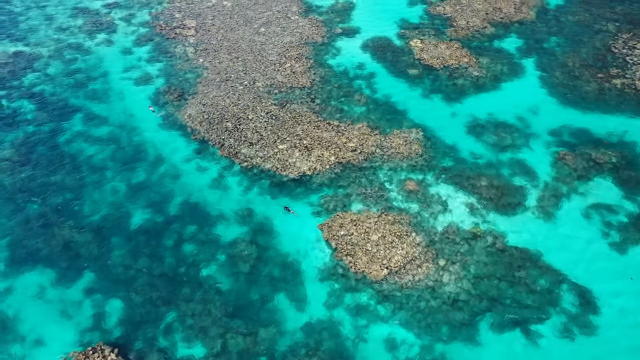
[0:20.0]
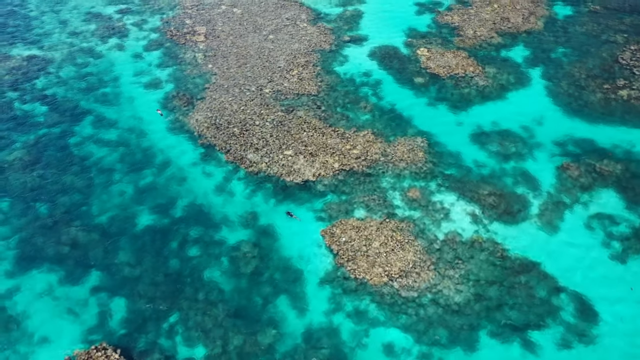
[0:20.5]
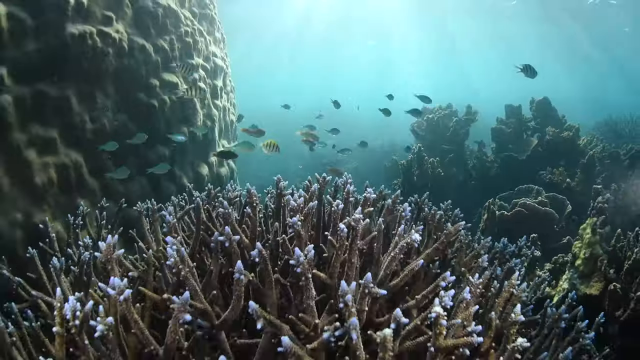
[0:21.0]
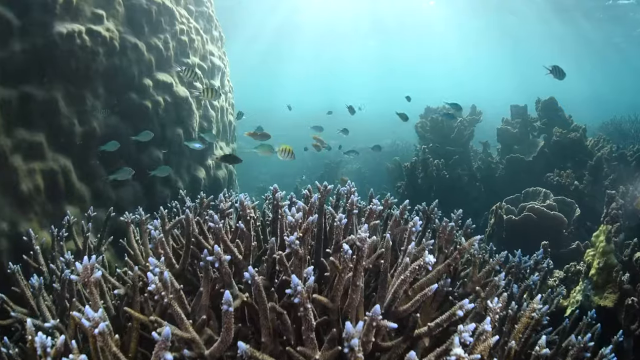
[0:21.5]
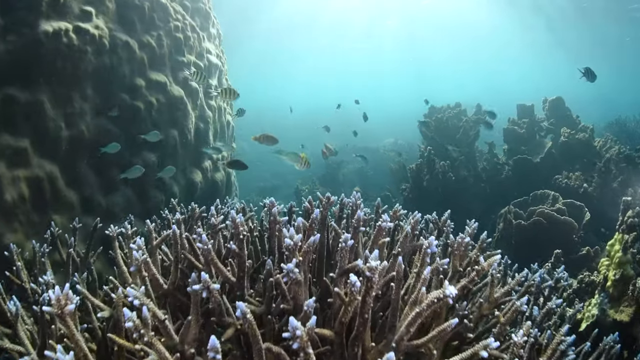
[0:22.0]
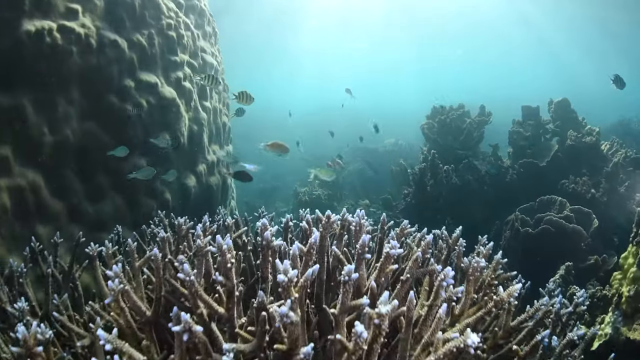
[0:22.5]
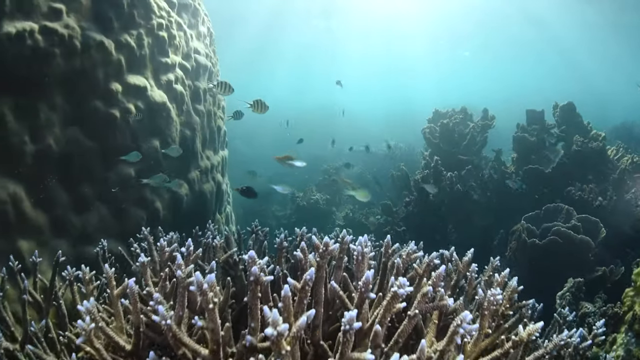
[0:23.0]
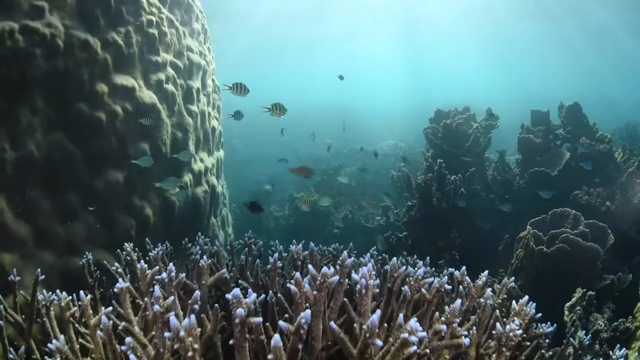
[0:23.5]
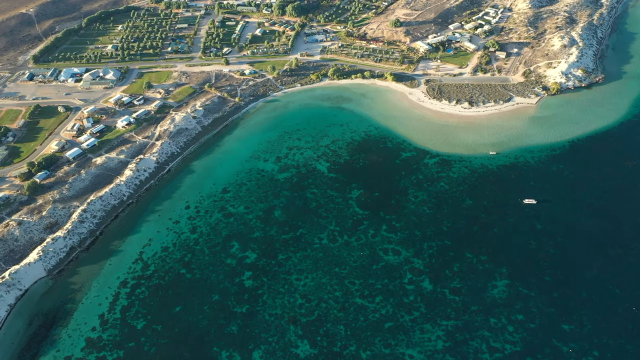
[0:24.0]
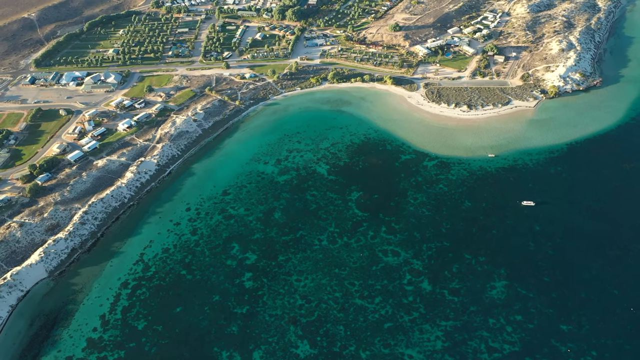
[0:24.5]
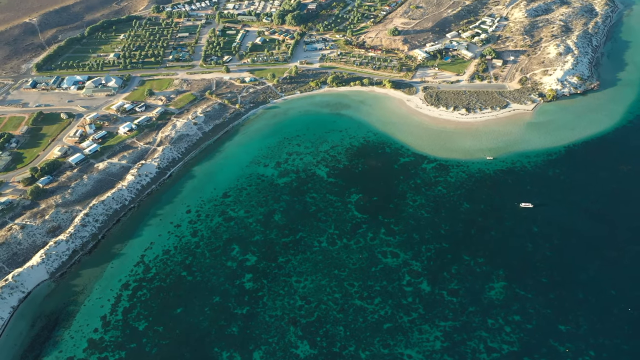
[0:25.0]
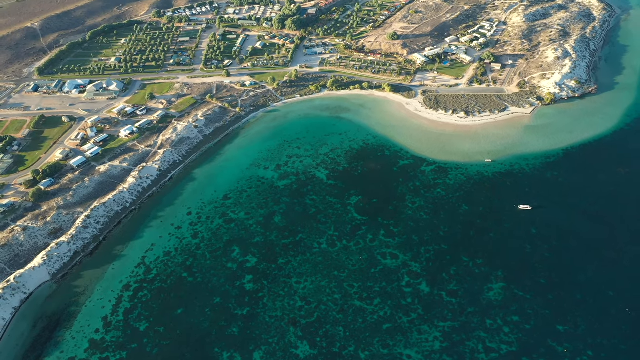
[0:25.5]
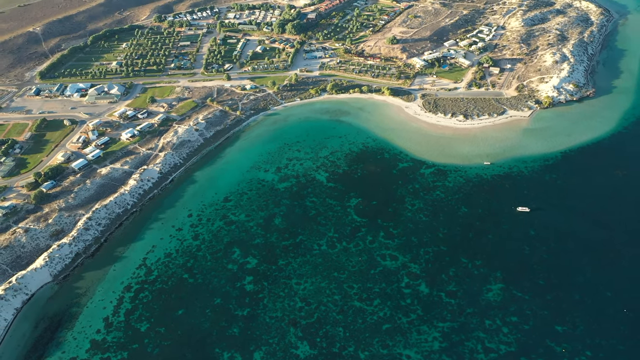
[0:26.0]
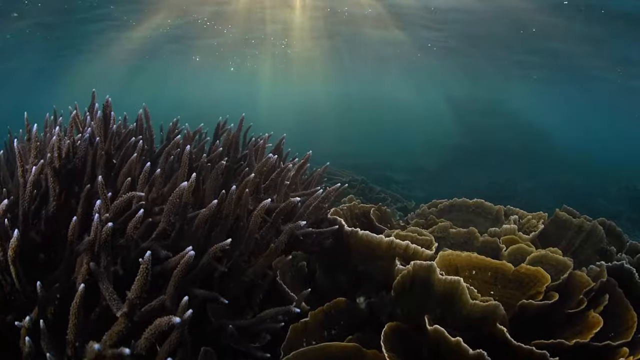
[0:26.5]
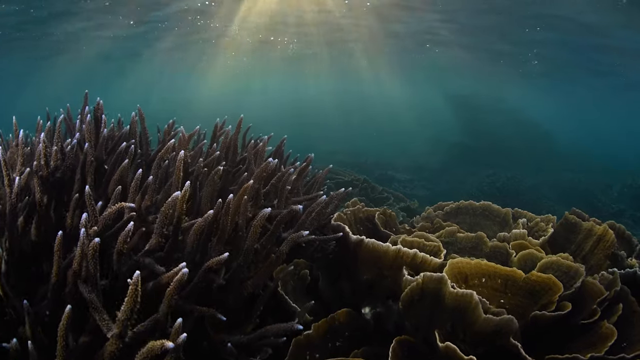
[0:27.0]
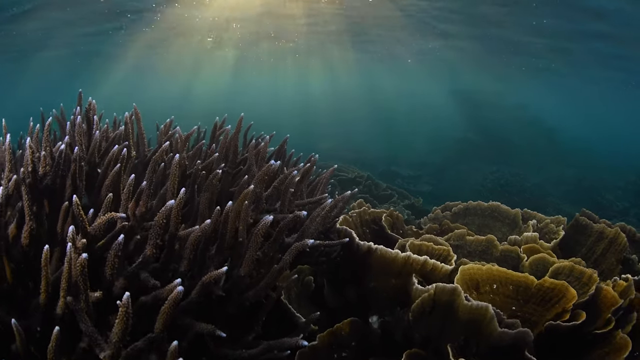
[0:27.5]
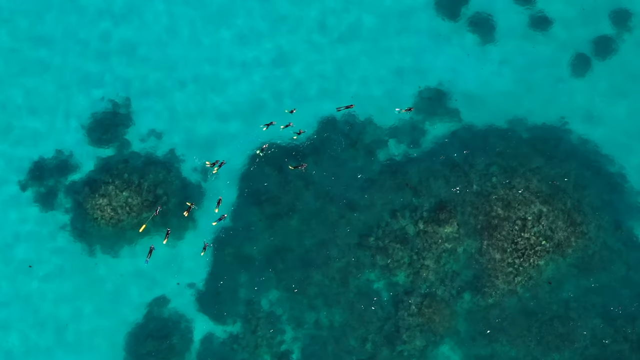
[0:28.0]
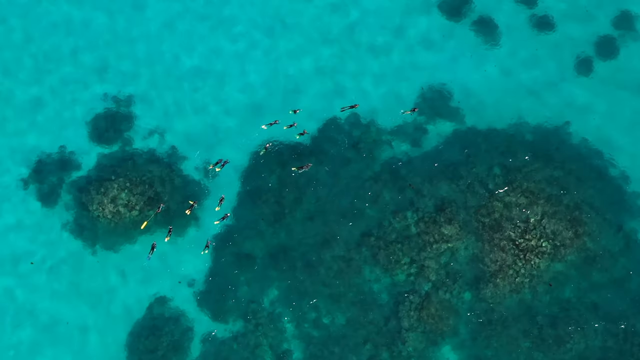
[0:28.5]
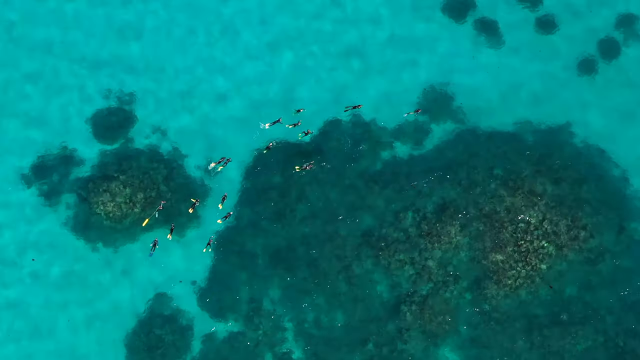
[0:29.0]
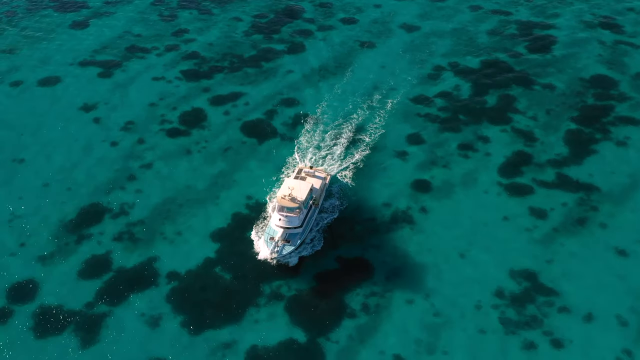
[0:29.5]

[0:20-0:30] A coral reef is filmed from above, and the footage then moves down into the water, almost like a diver's view, showing various species of fish around the reef. An aerial view follows, showing the sheer size of the coral reef and the land in close proximity to it. A close-up of the reef shows the sun shining through the water onto parts of the reef. A series of divers, probably several dozen, swim in and around the coral reef, filmed from above. A boat, like a cruise ship, goes around the area where the coral reef is.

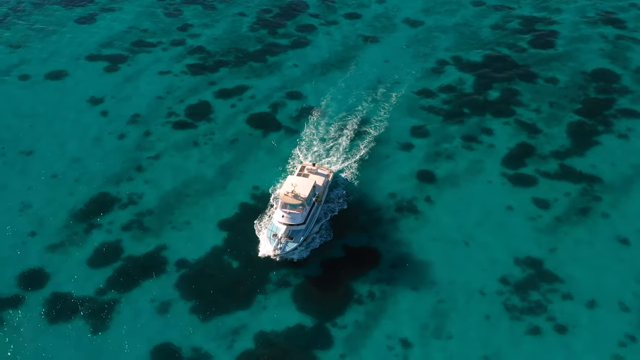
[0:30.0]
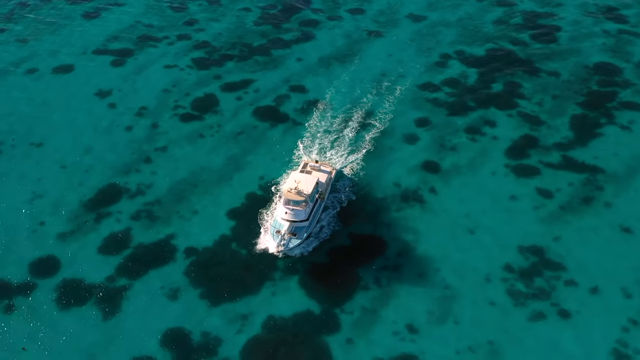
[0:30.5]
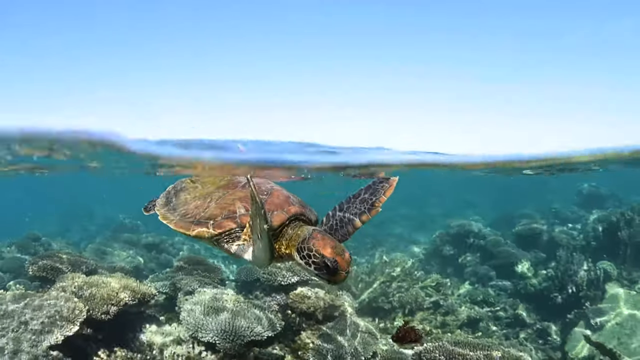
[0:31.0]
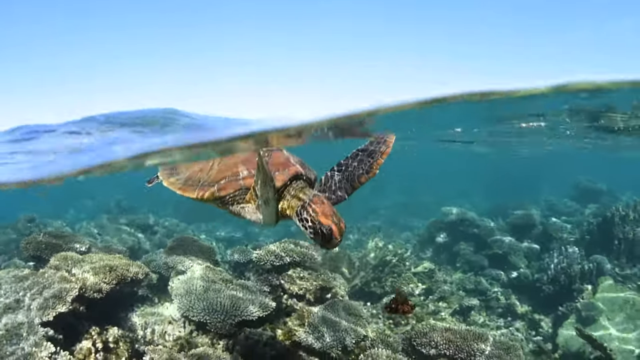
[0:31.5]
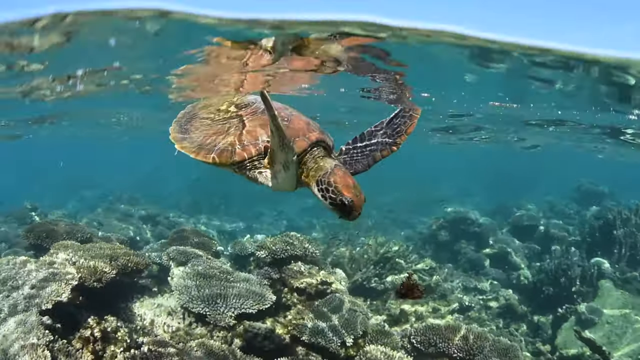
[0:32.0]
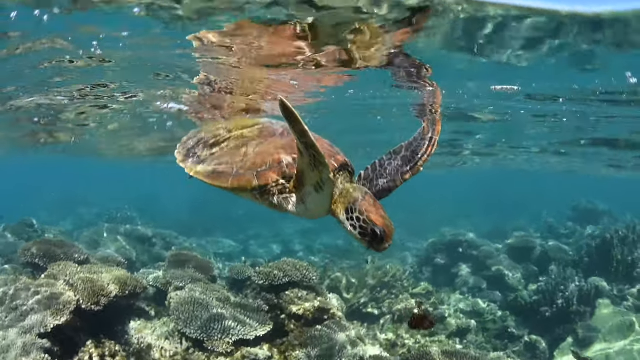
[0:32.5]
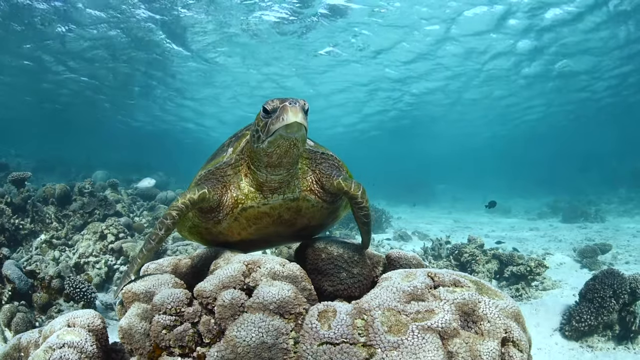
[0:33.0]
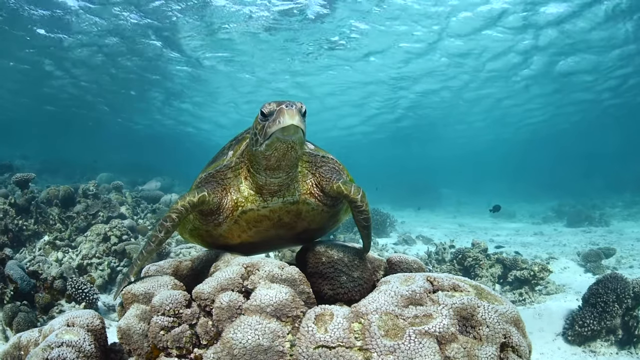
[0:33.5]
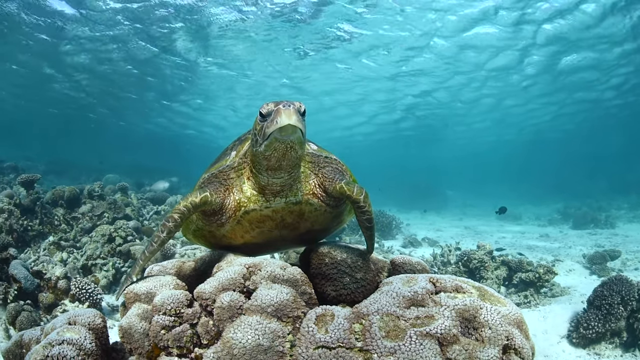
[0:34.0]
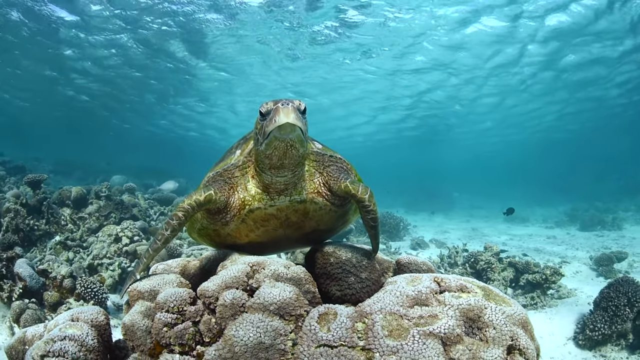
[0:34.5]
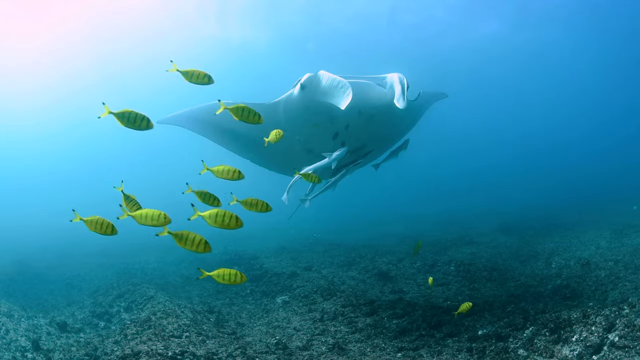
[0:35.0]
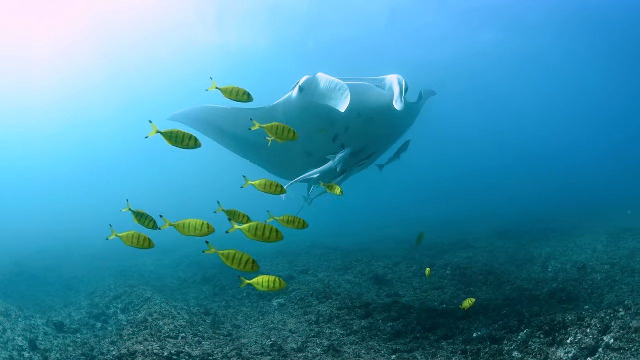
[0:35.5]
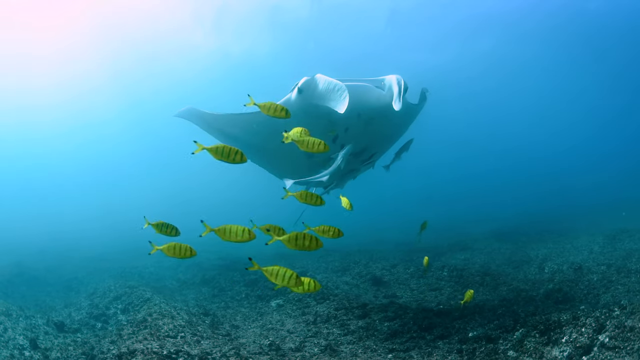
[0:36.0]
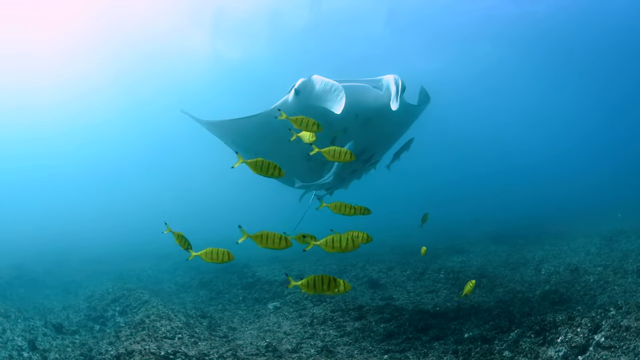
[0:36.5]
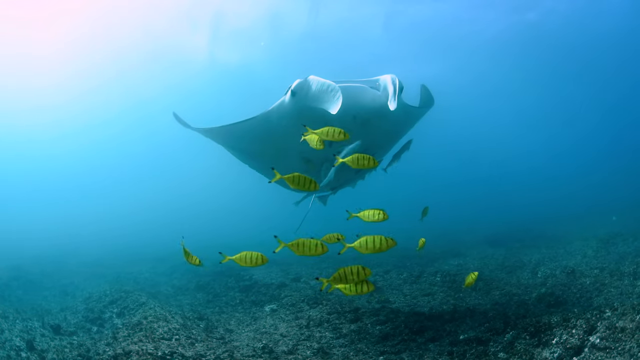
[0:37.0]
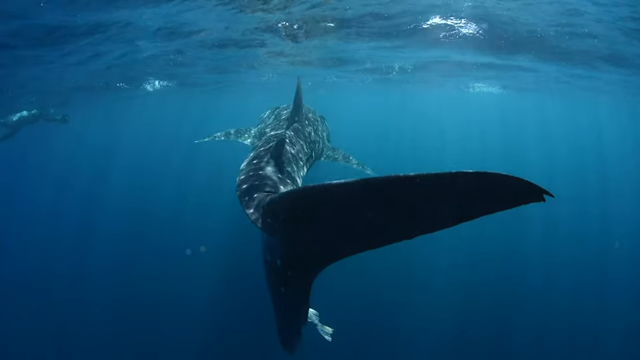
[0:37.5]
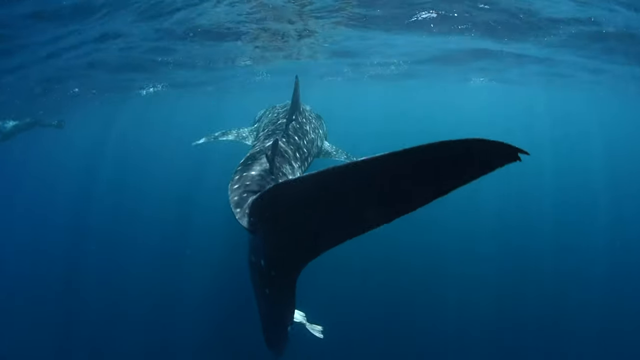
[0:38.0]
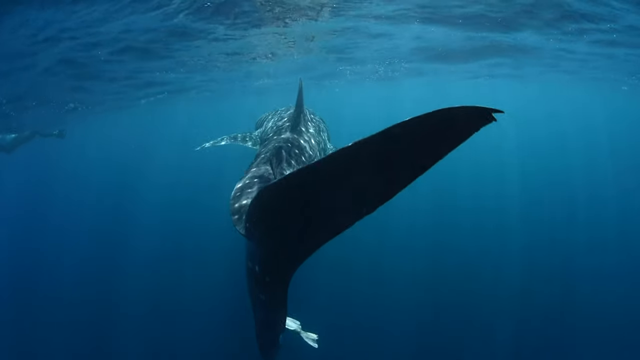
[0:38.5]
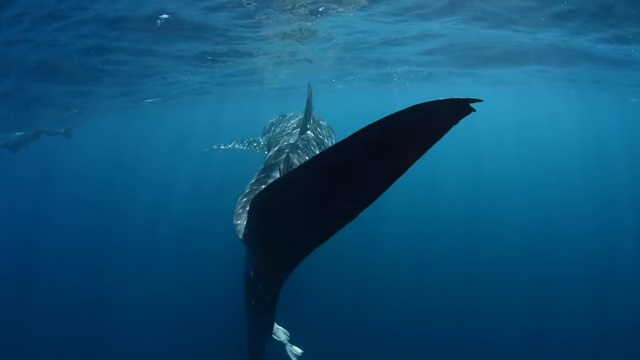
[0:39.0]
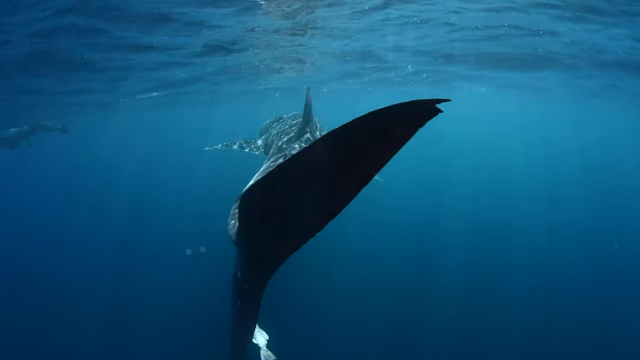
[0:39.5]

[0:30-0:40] A cruise ship goes over a coral reef, filmed from above. The view then shifts to sea level, where a turtle is diving; the shot is apparently filmed by a diver with his head at the same level as the ocean, and the waves and water wobble as the turtle moves around. The turtle is then shown completely submerged underwater, down at the level of the coral reef. What appears to be a rayfish goes through the water, and a colourful school of yellow tropical fish with green stripes passes by. What looks like a shark is then seen in the water.